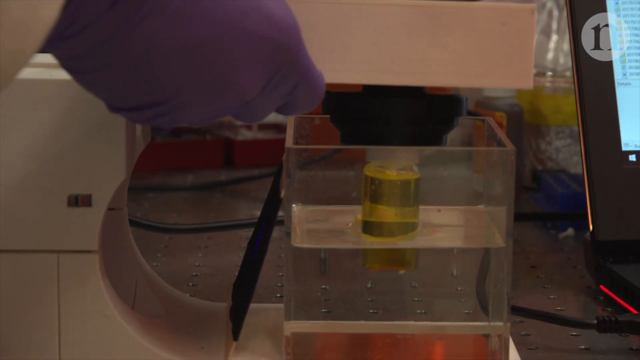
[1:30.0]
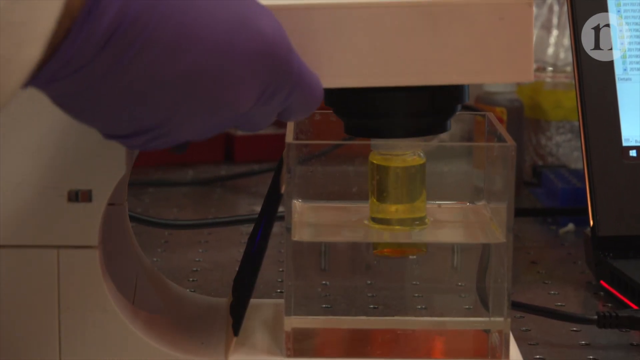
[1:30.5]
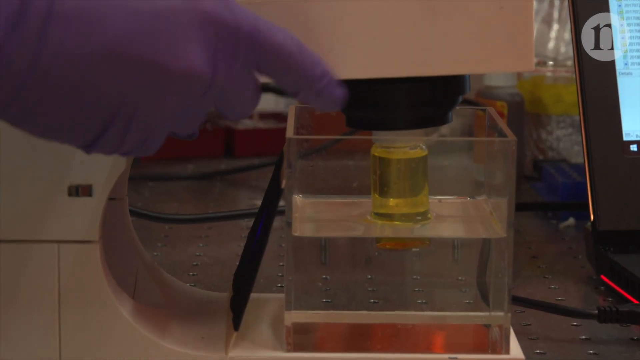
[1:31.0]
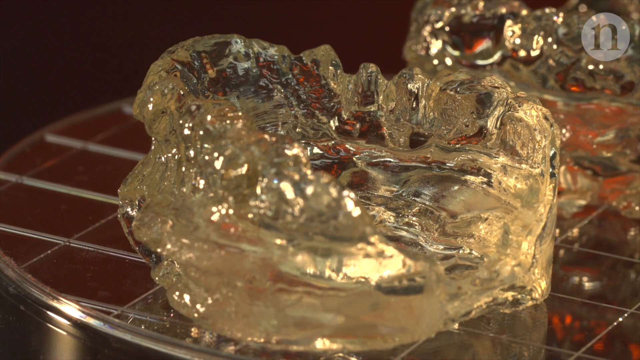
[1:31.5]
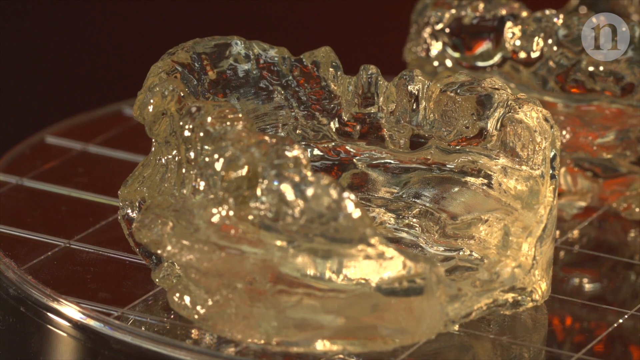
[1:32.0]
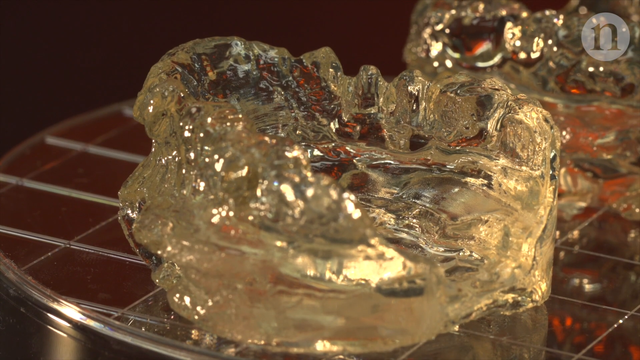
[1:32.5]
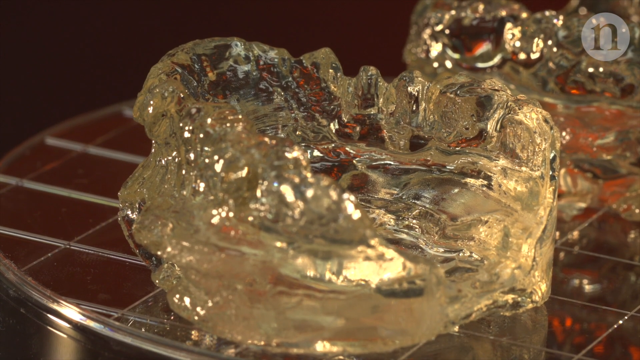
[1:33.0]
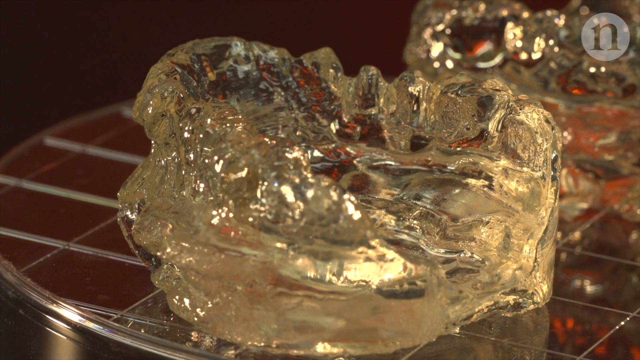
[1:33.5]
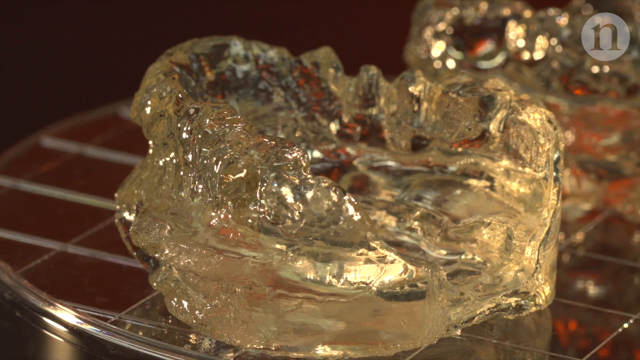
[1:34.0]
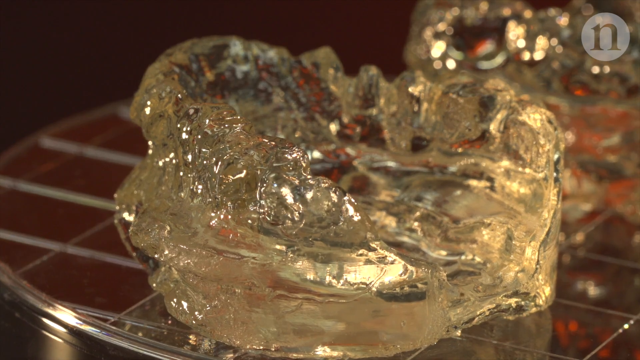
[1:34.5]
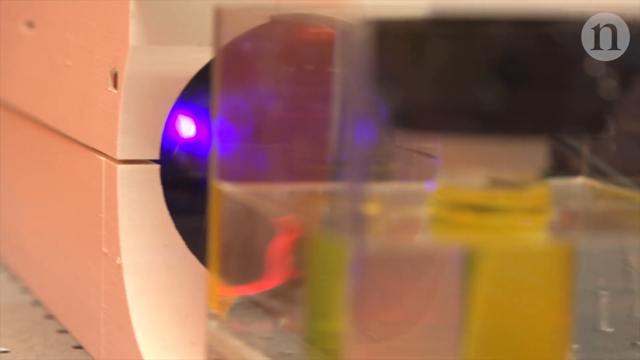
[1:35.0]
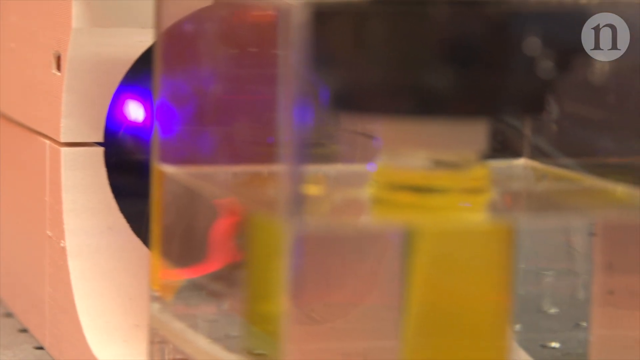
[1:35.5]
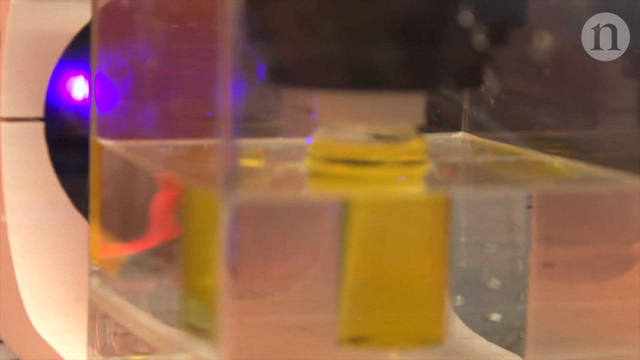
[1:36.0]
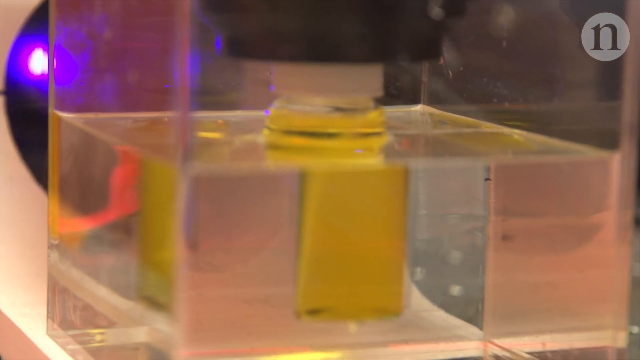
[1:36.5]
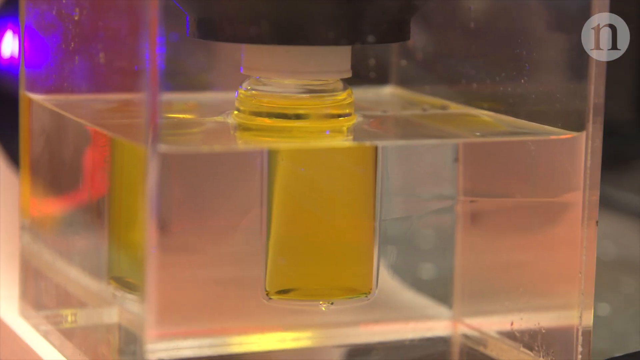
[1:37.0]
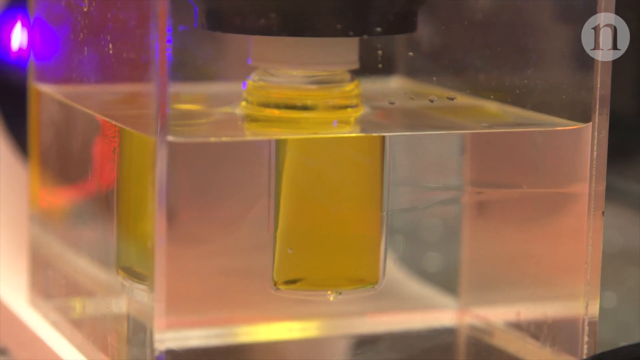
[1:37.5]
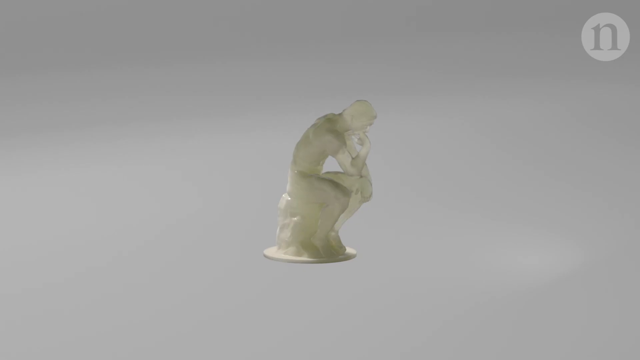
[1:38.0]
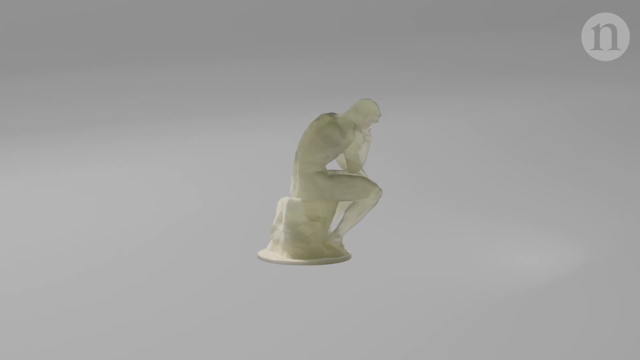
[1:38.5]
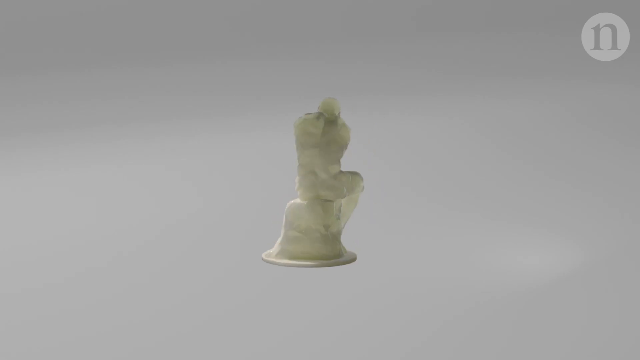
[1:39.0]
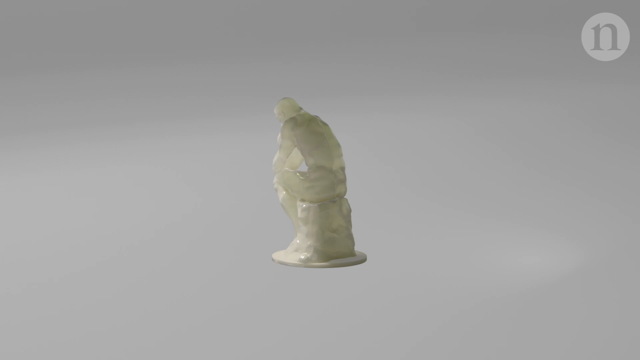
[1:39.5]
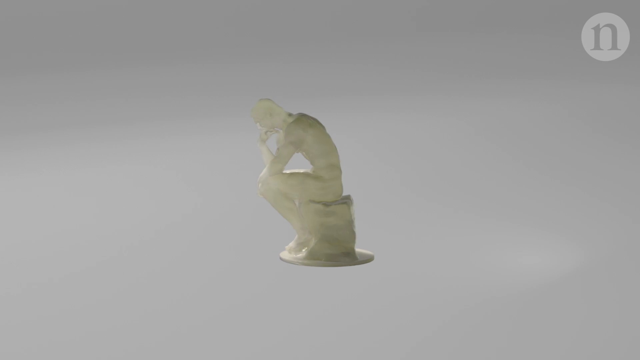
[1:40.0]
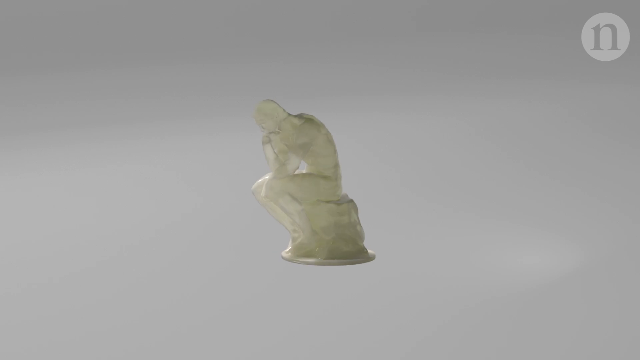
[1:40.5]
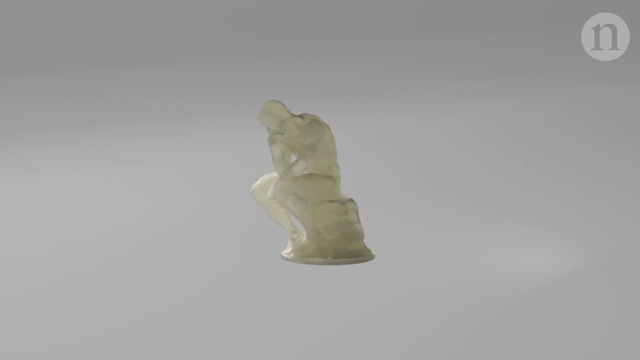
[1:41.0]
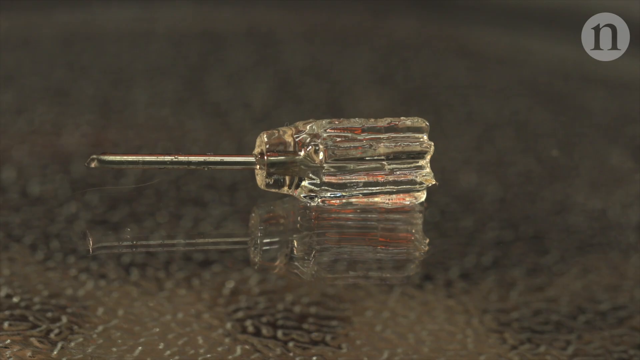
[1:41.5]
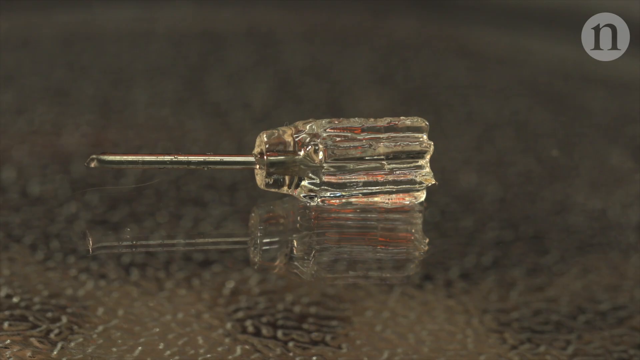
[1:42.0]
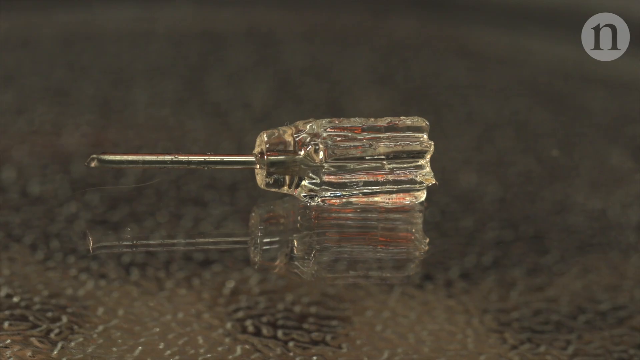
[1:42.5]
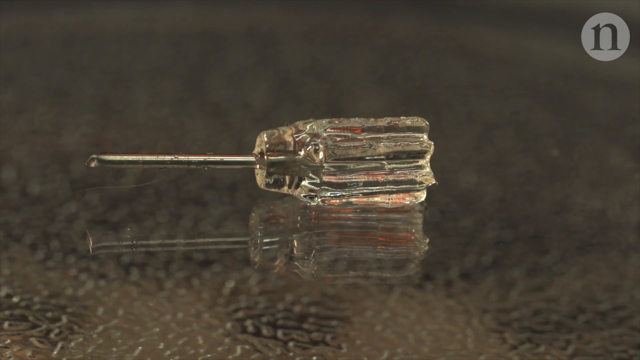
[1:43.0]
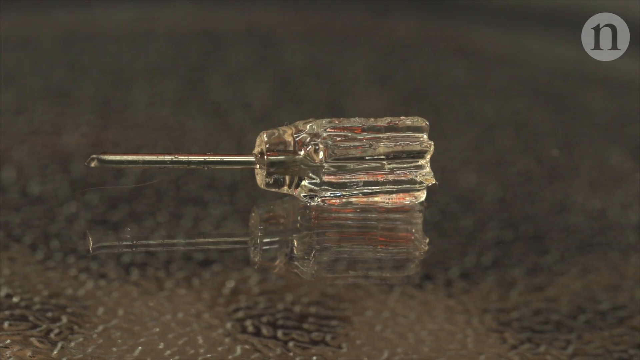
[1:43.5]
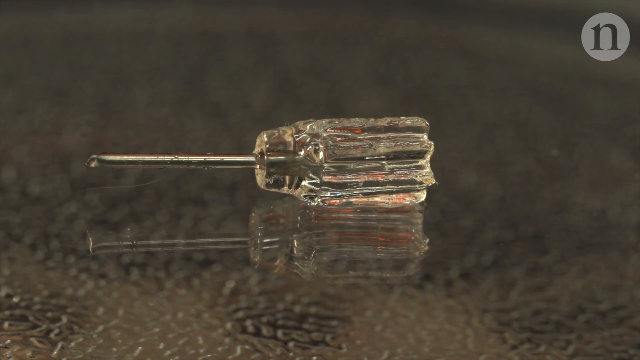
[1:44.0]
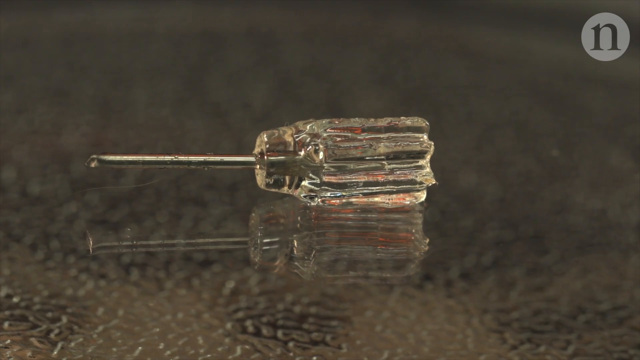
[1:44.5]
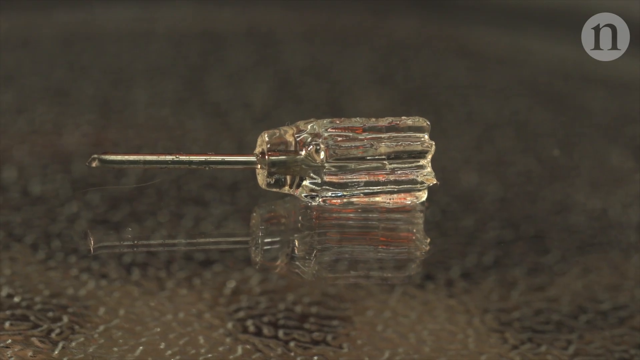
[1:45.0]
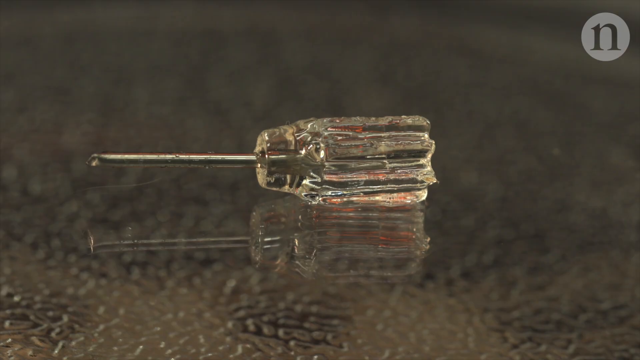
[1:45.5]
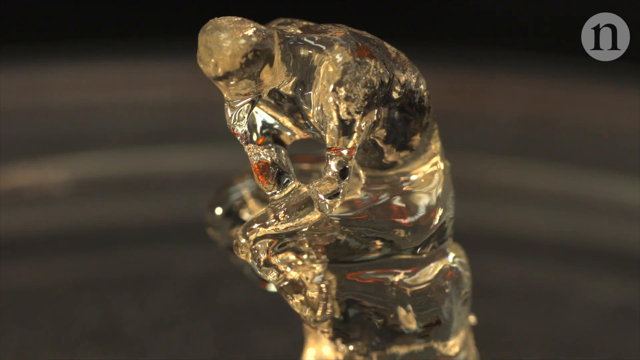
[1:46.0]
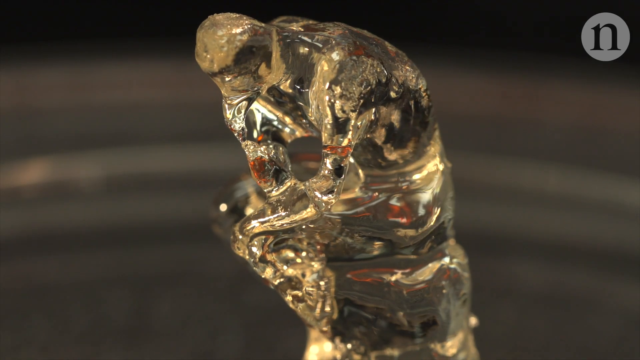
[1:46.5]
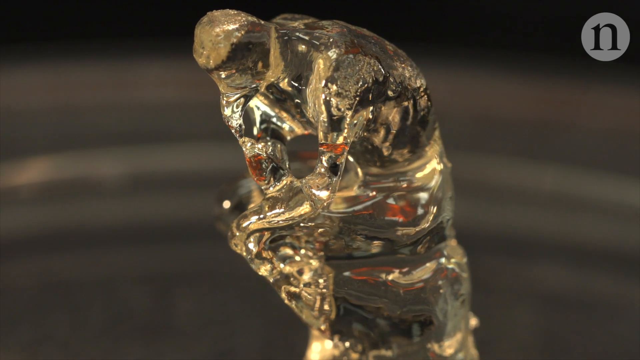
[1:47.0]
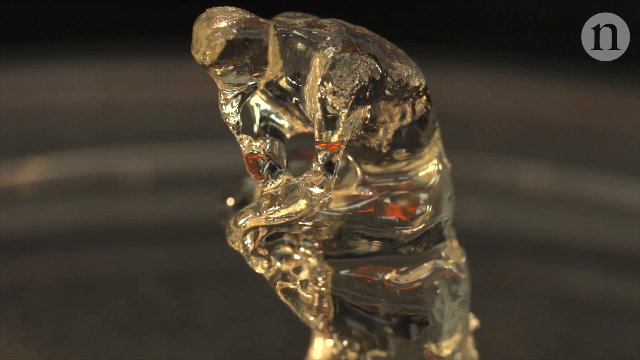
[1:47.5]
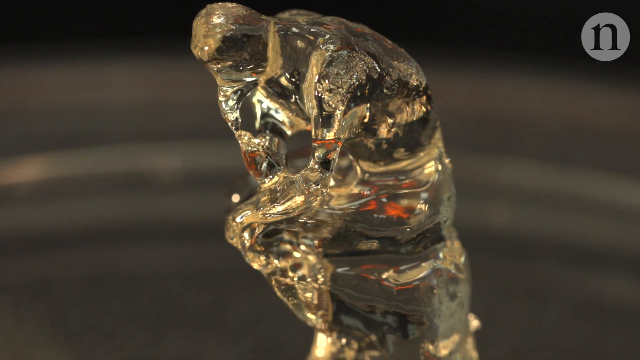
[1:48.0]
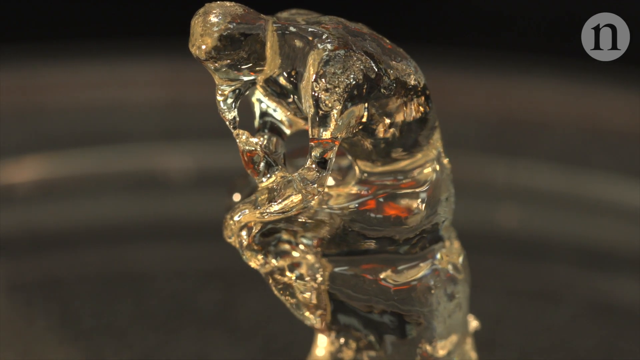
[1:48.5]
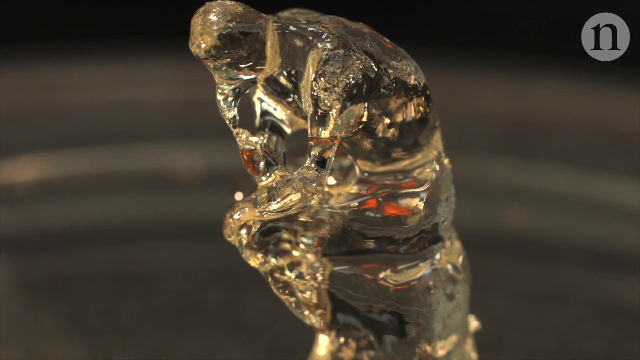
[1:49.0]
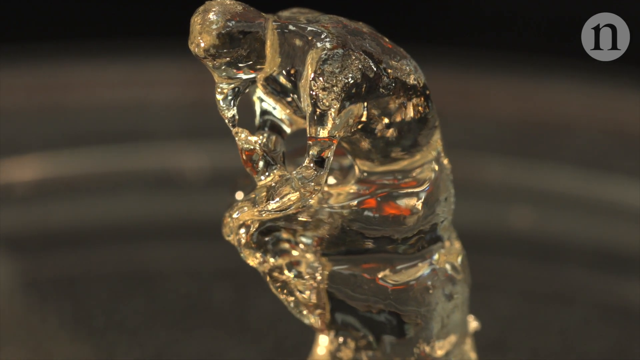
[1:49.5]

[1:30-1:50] A person puts yellow liquid on something, apparently a machine, and the human body pictured earlier is clearly shaped. A light shines on the colorful liquid, and it then becomes a human body structure like the one seen earlier in the video.